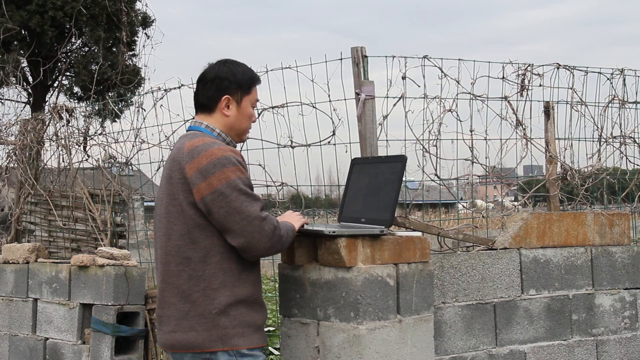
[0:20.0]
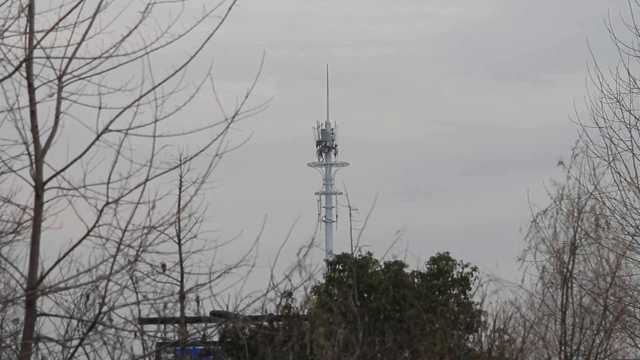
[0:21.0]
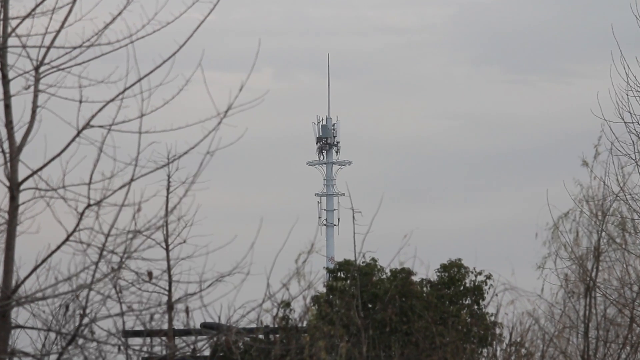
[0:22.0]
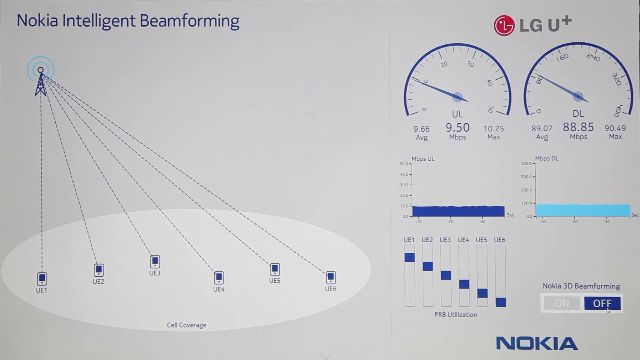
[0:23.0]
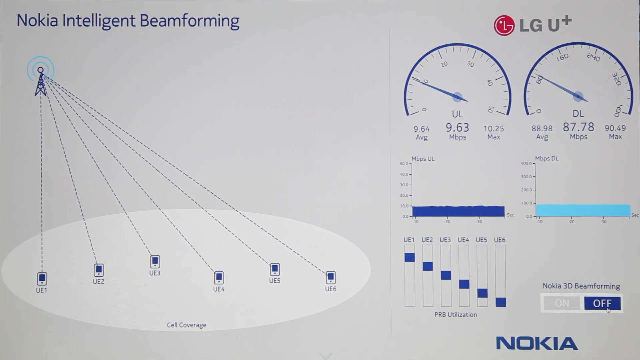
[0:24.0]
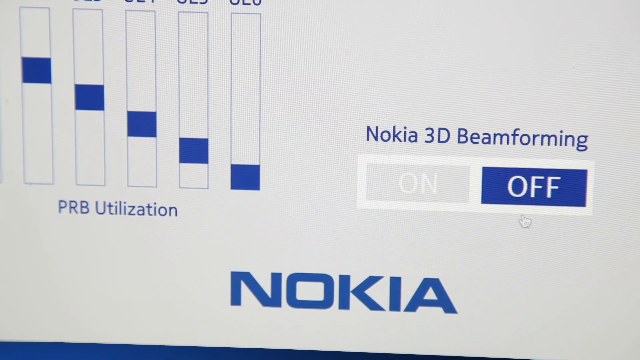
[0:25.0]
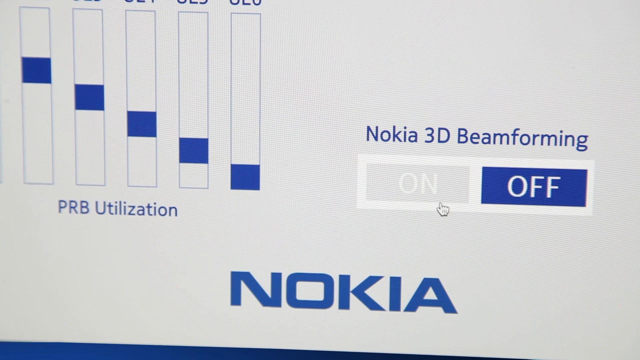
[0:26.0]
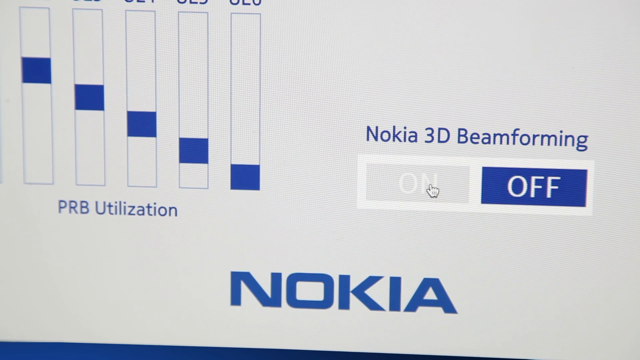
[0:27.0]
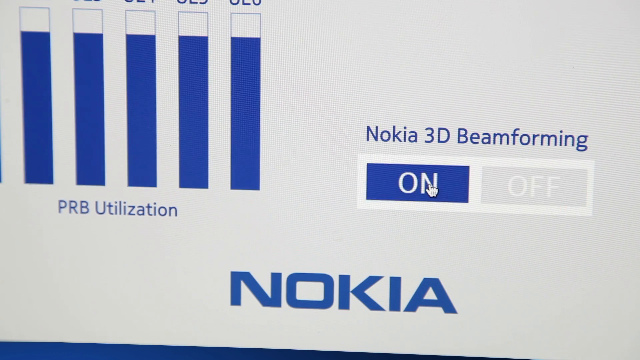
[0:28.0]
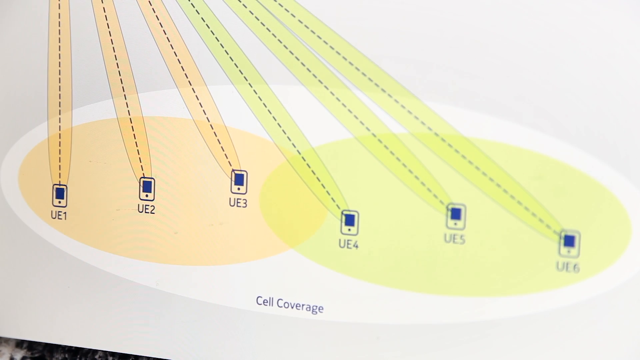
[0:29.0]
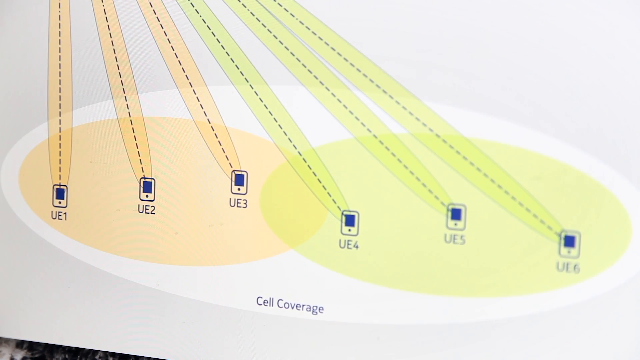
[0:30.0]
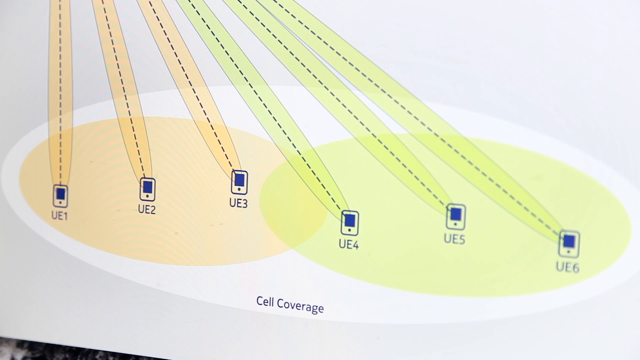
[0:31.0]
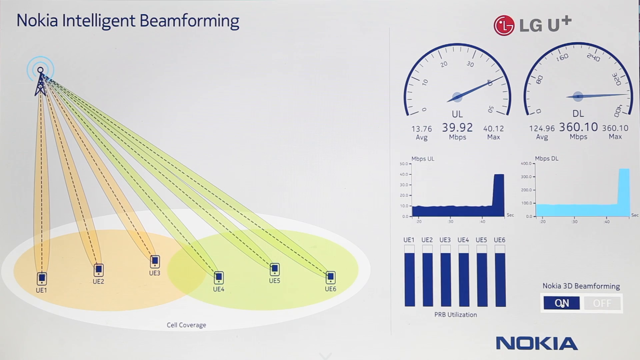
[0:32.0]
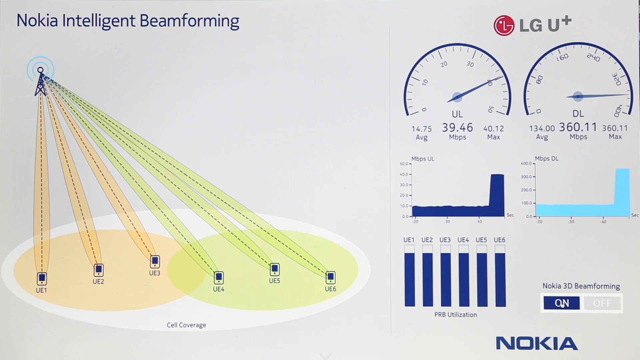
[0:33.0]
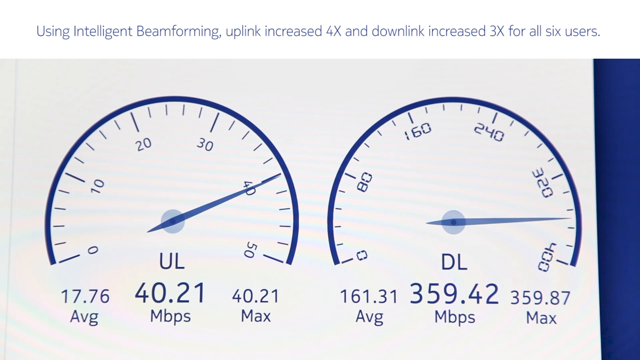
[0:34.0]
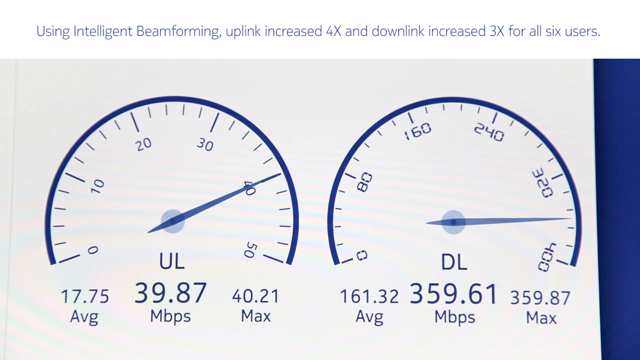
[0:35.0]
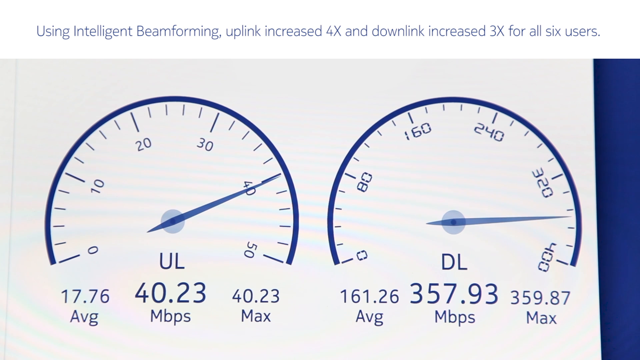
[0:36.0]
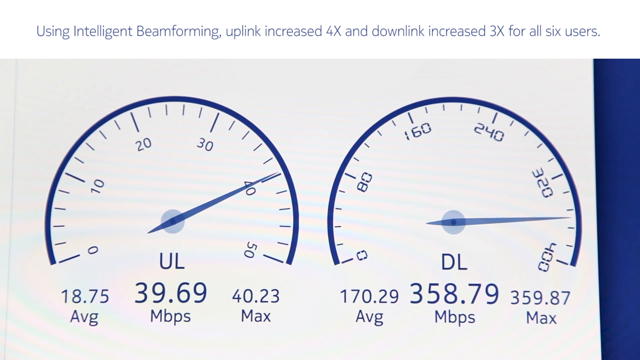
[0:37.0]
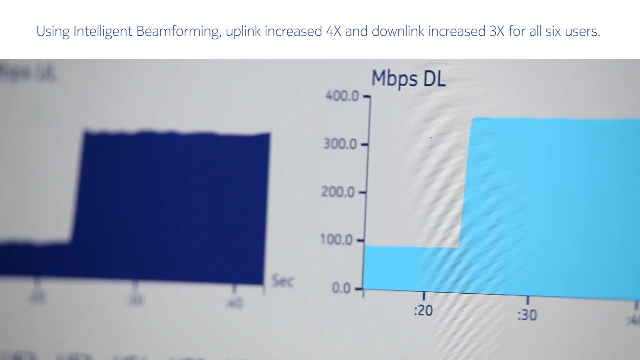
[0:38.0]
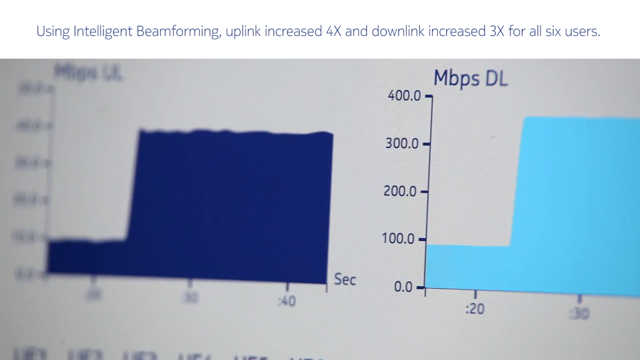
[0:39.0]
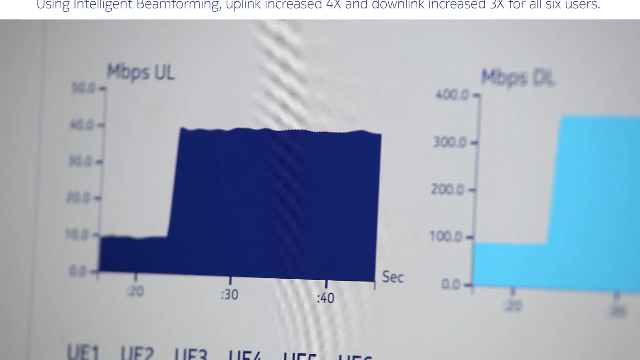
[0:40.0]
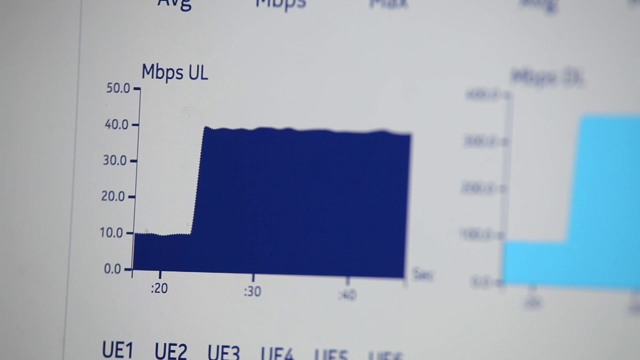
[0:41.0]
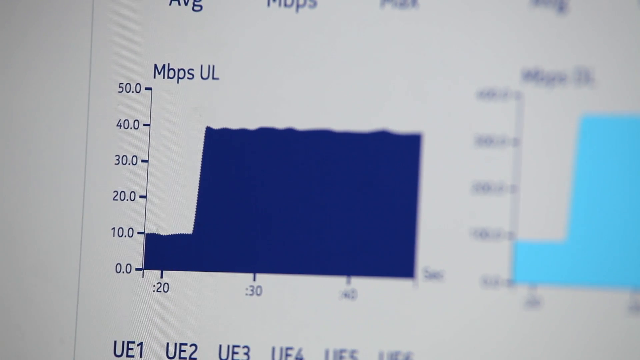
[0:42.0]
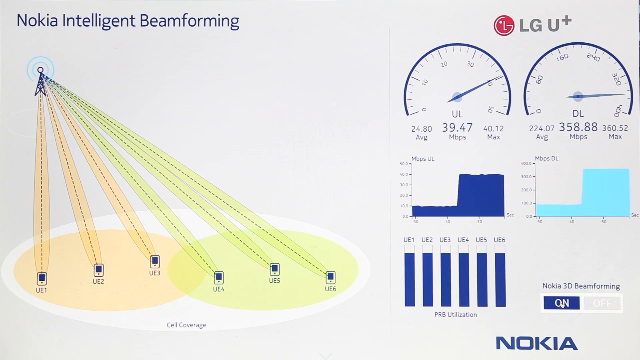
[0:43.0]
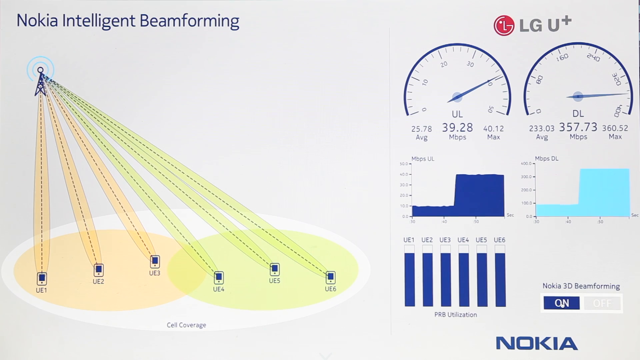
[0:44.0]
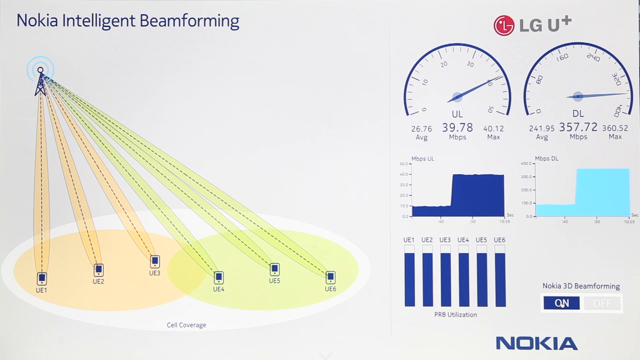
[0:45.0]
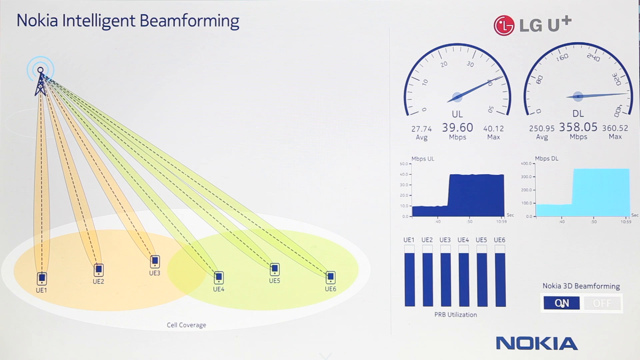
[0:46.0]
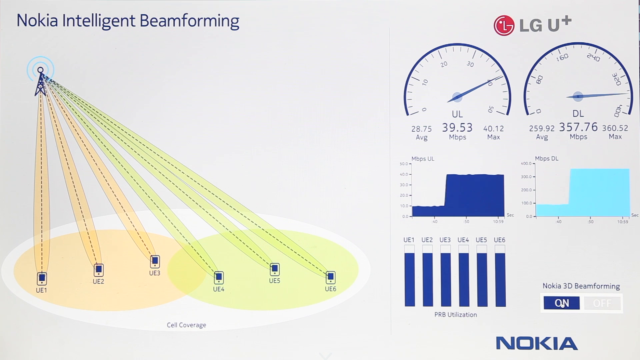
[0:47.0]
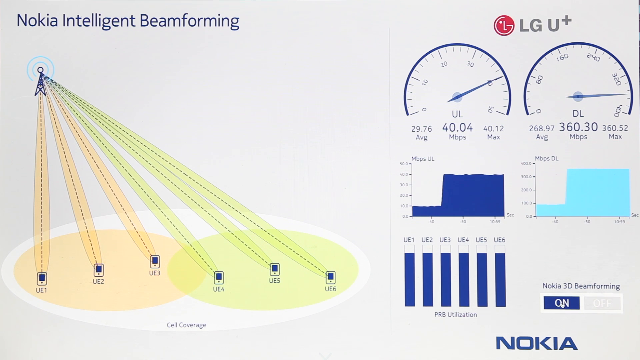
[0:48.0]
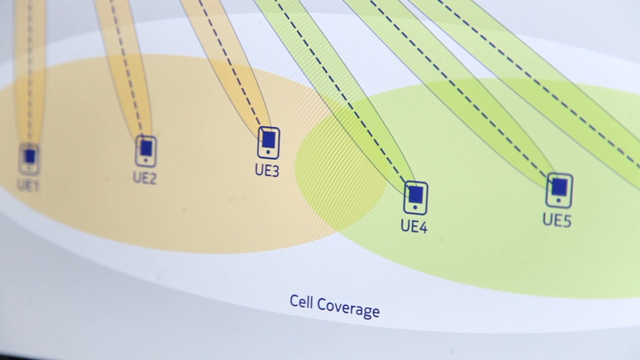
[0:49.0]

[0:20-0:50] A Chinese man, apparently in his 30s or 40s, with short dark hair, is seen only in side profile working on a laptop outside at the construction site. He wears a light long-sleeved sweater in a neutral tone that appears to be an earth tone. The screen switches back to a picture of the satellite from outside, then to a graph. At the very top on the right side of the screen, thin blue block letters say "Nokia intelligent beam forming"; on the left side are what look like two different dials measuring something, resembling the speed dials in a car. The graph on the right beneath the heading seems to show an image of the satellite with dotted lines going to different phones. The screen then shows "Nokia 3D Beamforming" in the middle left, and beneath it a rectangular button split in half, one half saying "ON" in white letters and the other saying "OFF" in blue. A close-up follows of the graph of the satellite with dotted lines going to phones placed in two circles: a light pink circle all the way to the right and a yellow circle next to it. Centered at the bottom, dark blue lettering reads "cell coverage".